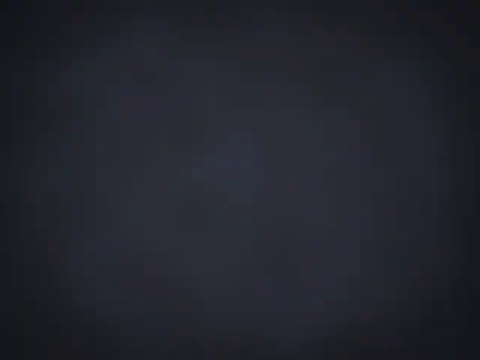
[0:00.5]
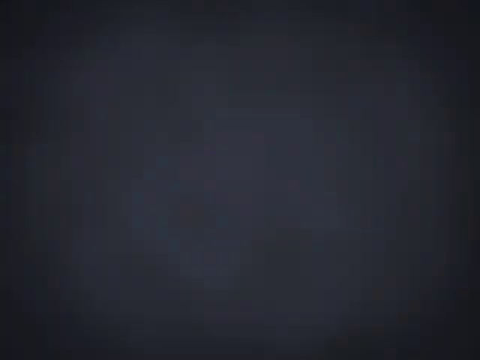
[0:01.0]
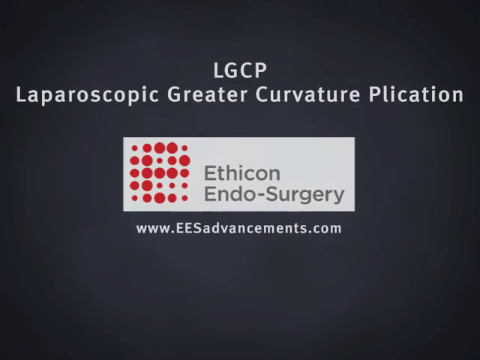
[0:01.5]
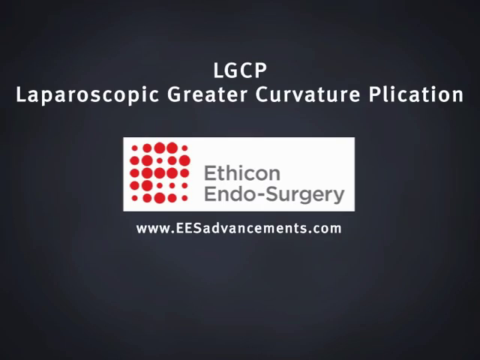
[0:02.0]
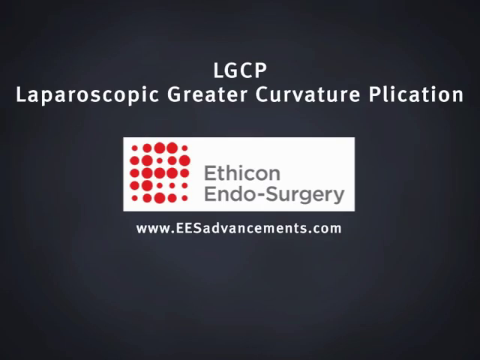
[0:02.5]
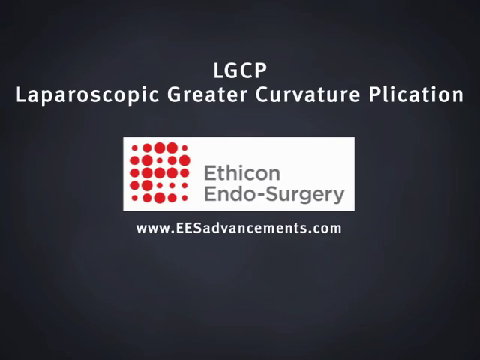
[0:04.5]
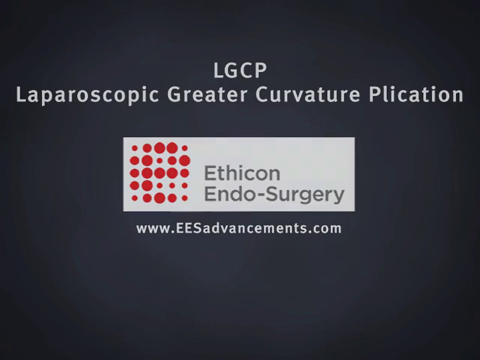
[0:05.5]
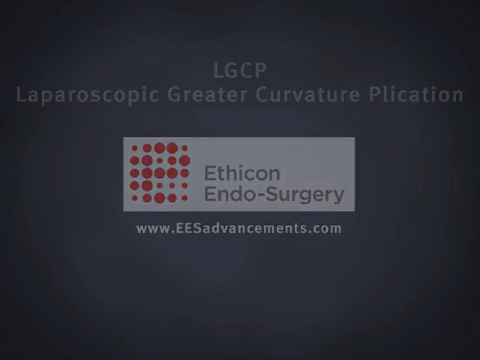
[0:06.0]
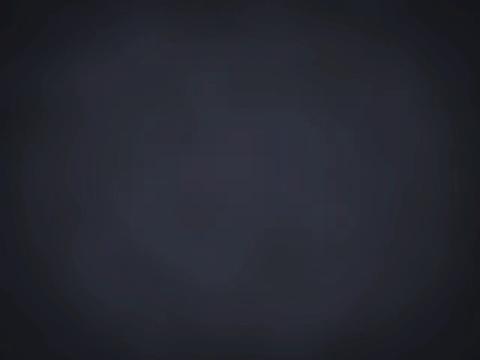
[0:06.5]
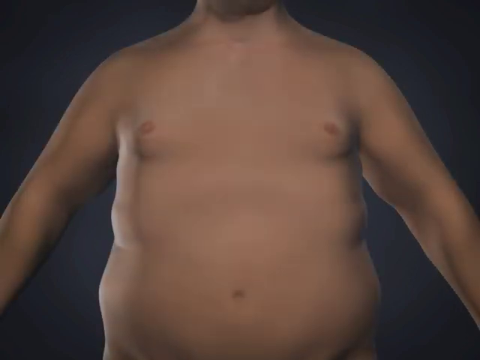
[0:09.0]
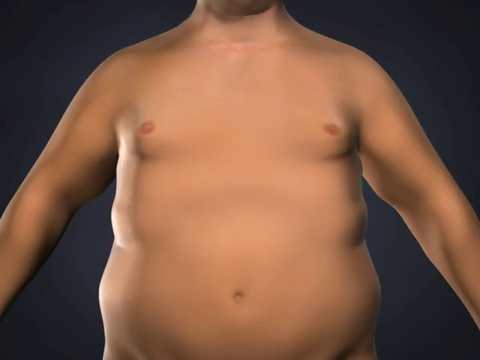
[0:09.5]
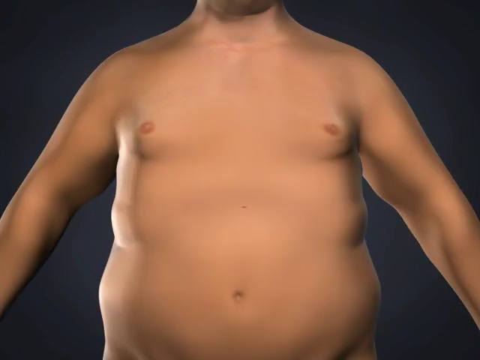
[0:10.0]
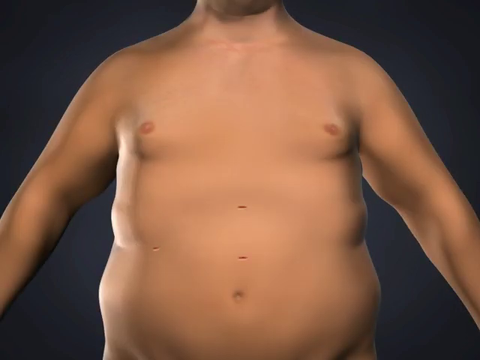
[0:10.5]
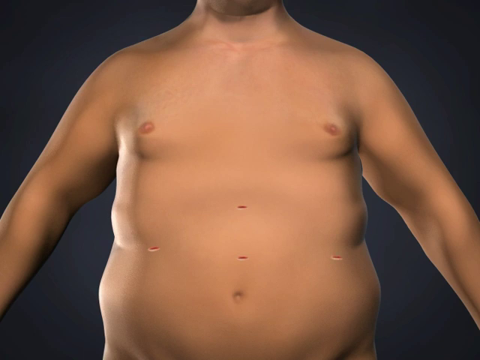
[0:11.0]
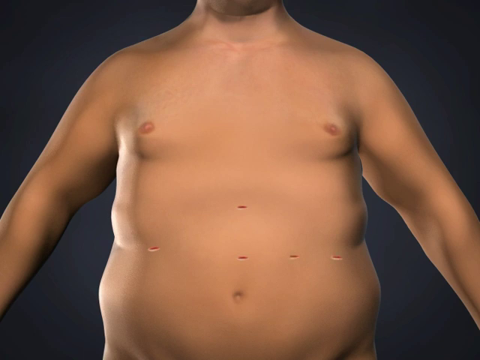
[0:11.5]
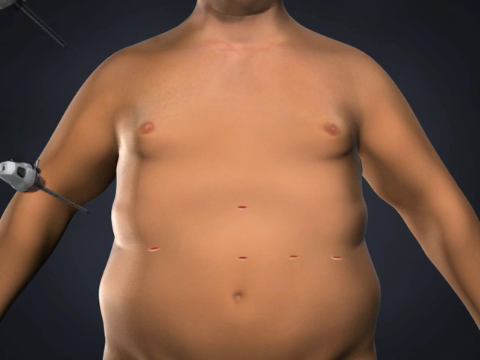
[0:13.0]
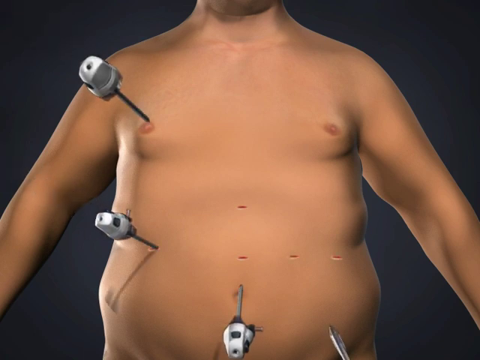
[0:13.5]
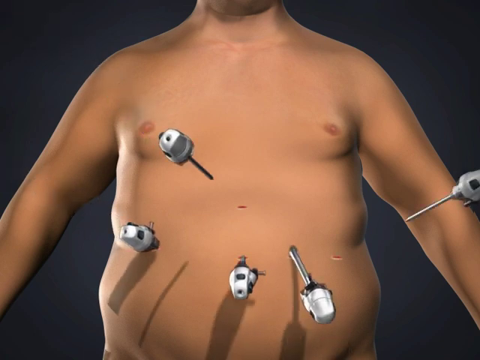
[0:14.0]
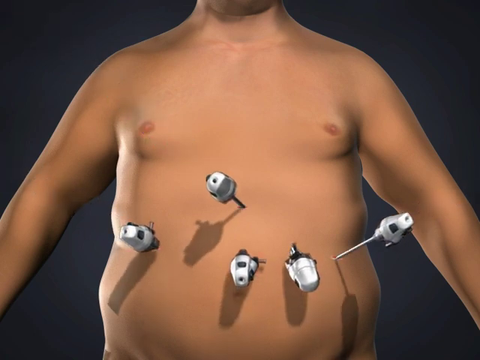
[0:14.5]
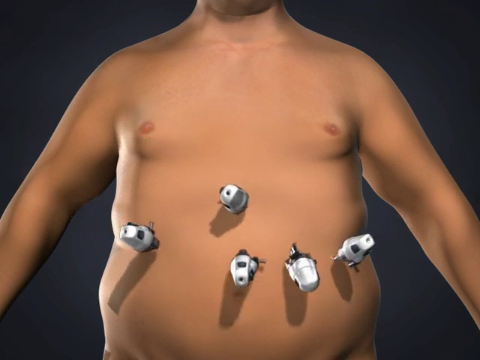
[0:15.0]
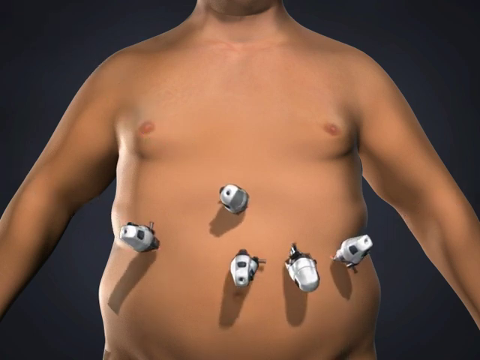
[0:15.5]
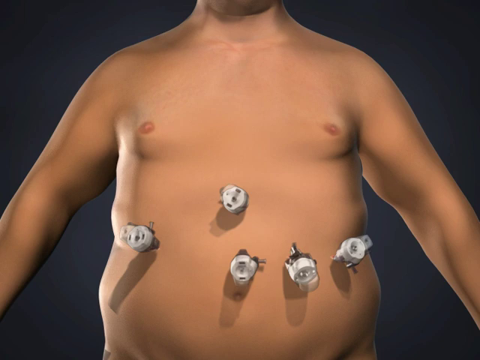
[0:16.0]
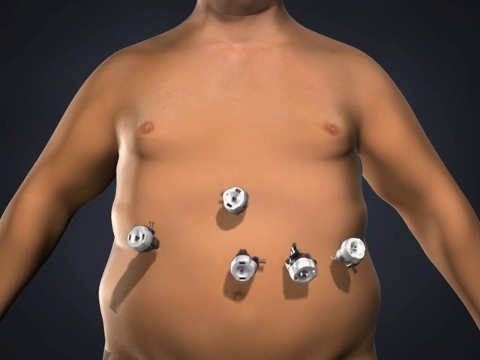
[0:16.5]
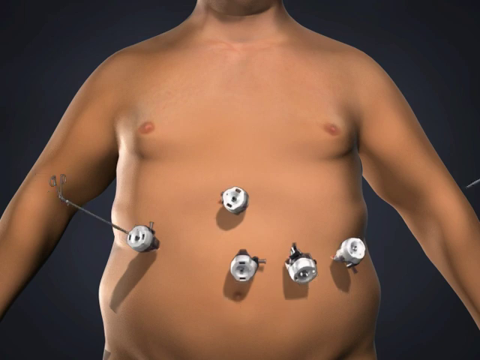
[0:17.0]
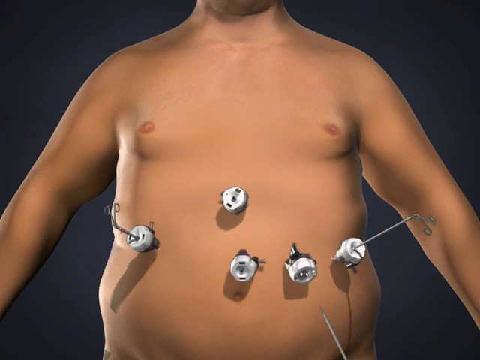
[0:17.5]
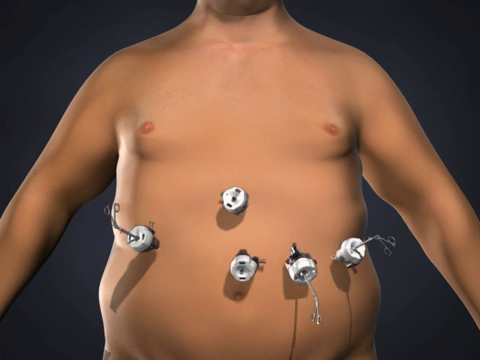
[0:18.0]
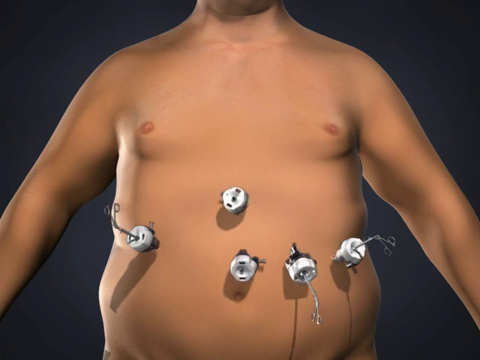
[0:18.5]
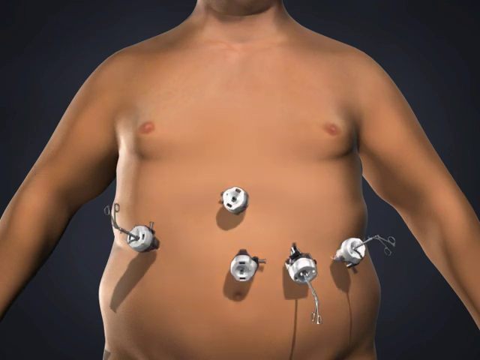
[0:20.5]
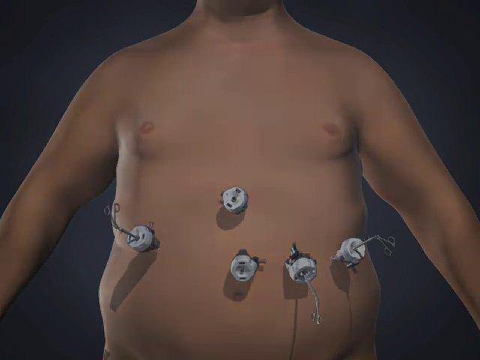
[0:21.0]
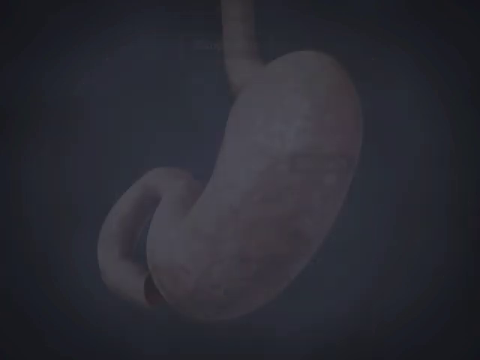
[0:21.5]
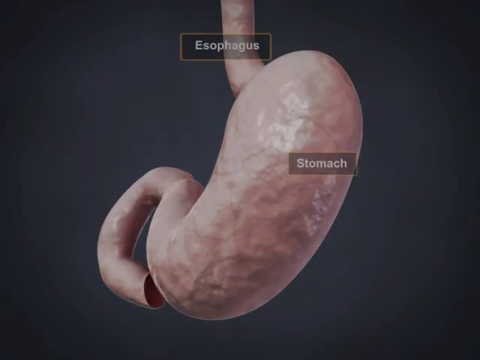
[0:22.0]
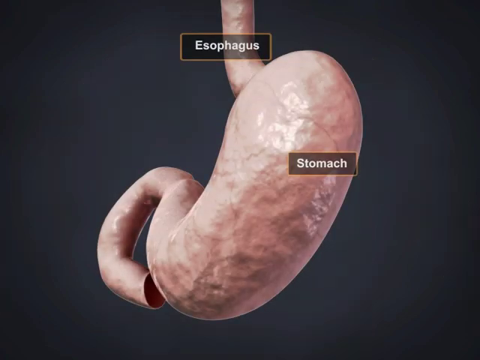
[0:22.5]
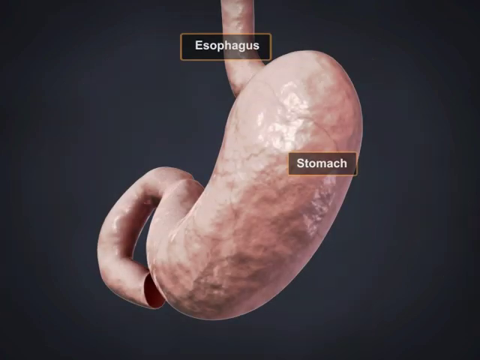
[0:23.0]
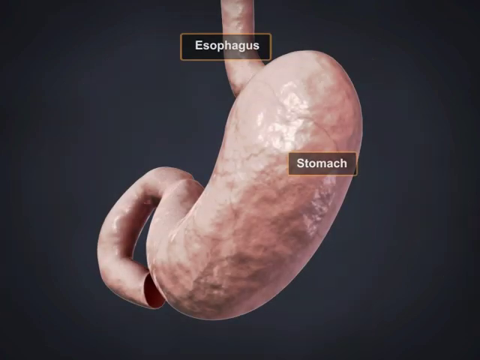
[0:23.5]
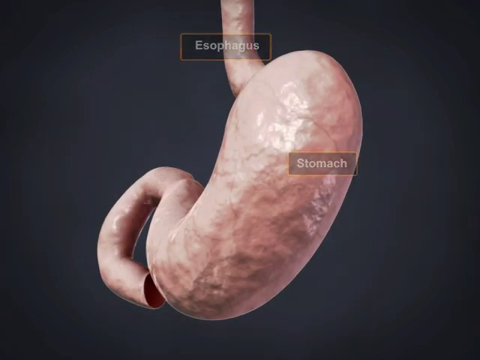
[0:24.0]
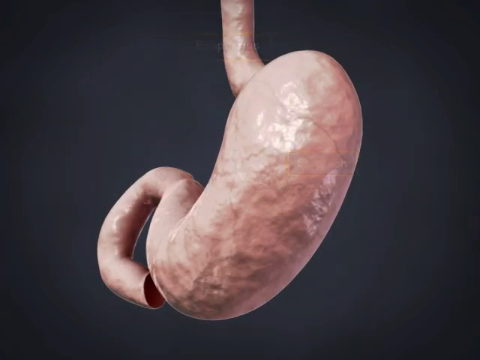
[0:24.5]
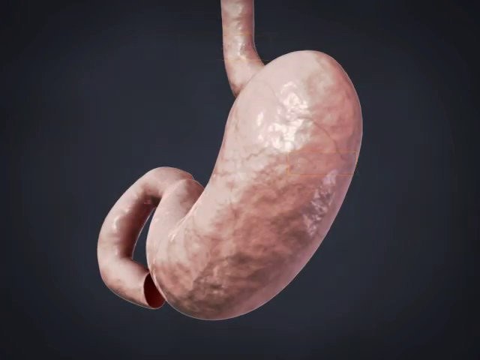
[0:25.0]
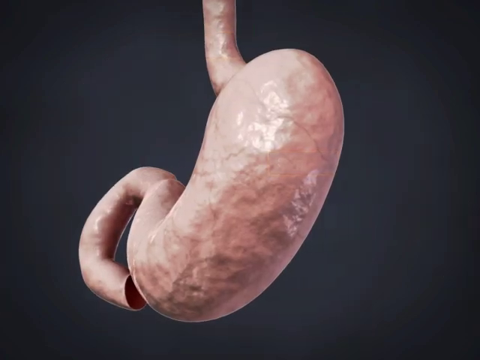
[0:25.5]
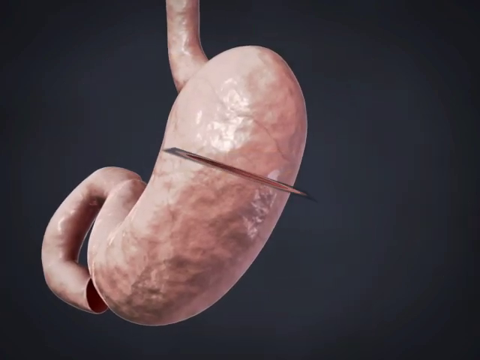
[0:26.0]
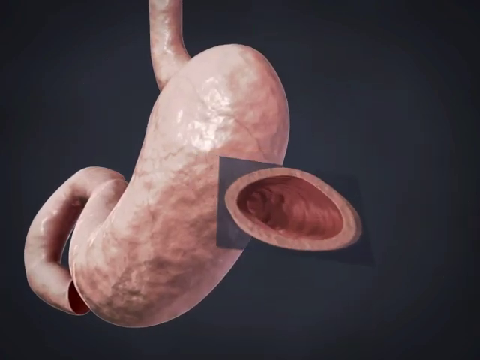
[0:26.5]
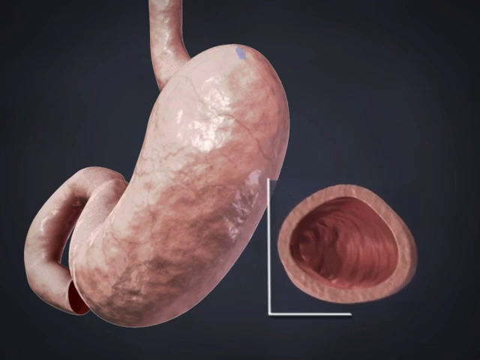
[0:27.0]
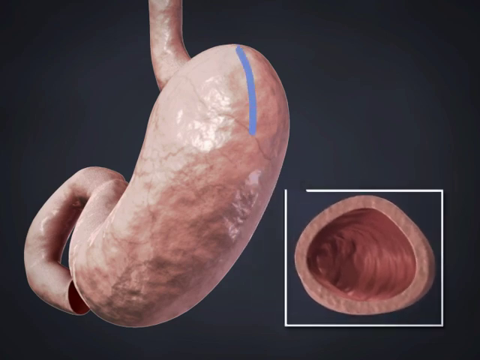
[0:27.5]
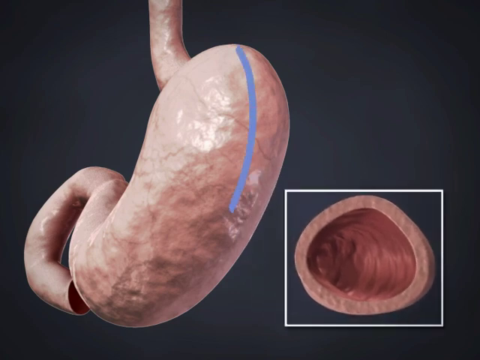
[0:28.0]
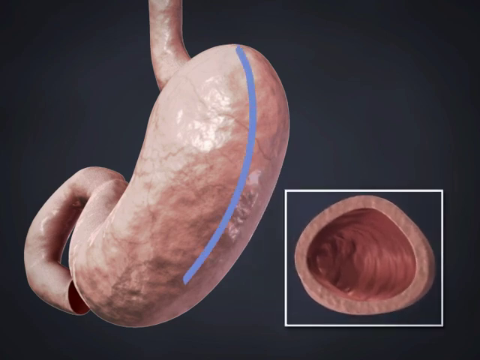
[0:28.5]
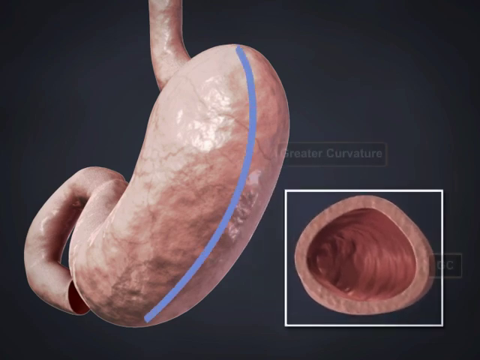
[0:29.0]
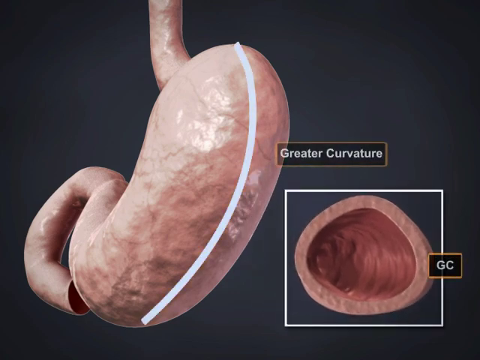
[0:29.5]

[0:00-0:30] Text on a black screen reads "laparoscopic greater curvature plication Ethicon endosurgery EES Advancements.com", alongside a red, white and gray logo. A human chest appears, with the face cut off right at the chin. An illustration of a stomach and an esophagus follows, part of an animation. The animation shows a male chest with fixtures, or probes, plugged into it: five probes, one of them in kind of a horizontal row. The animation apparently shows the inner workings of the stomach.